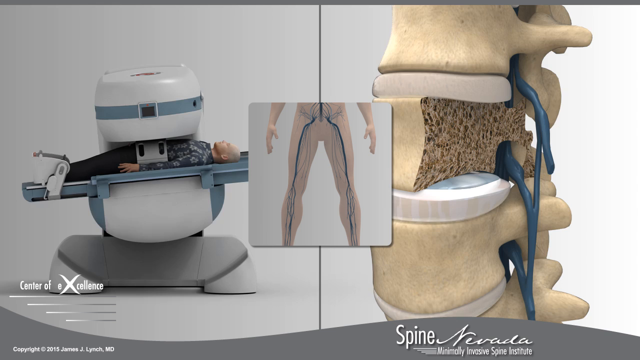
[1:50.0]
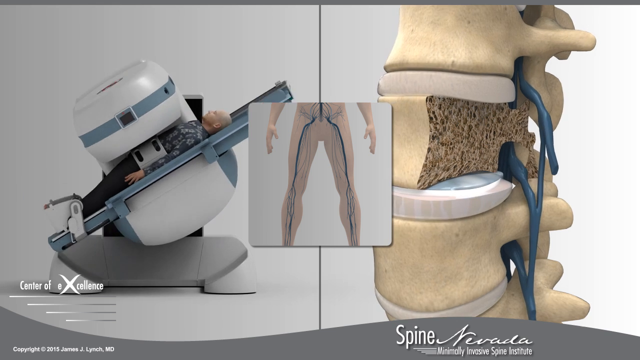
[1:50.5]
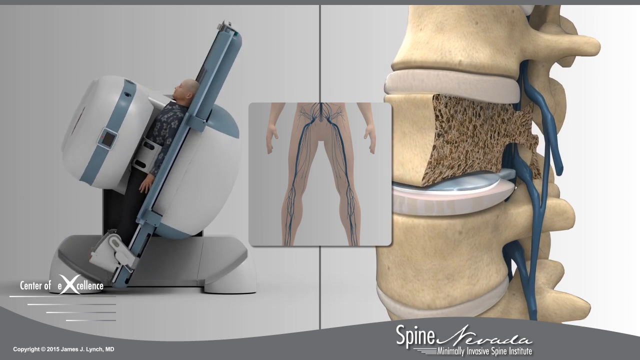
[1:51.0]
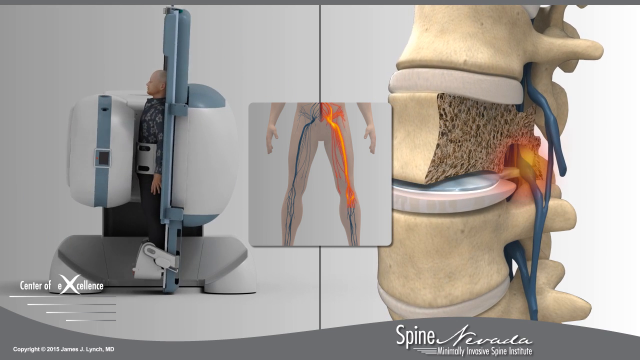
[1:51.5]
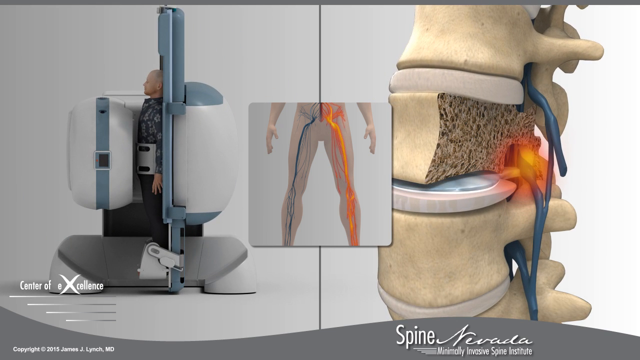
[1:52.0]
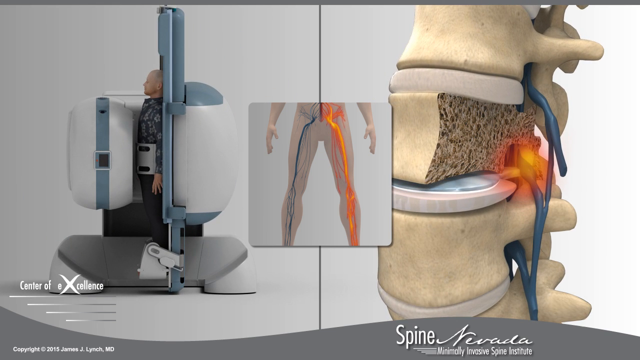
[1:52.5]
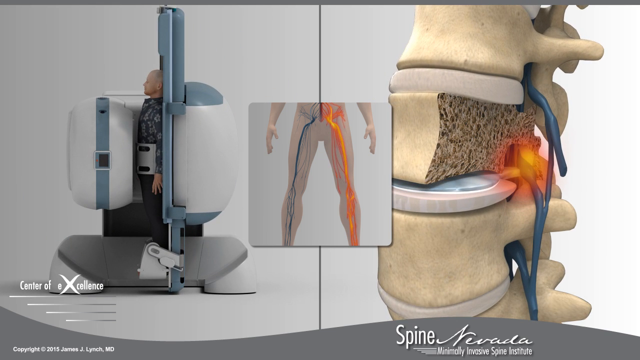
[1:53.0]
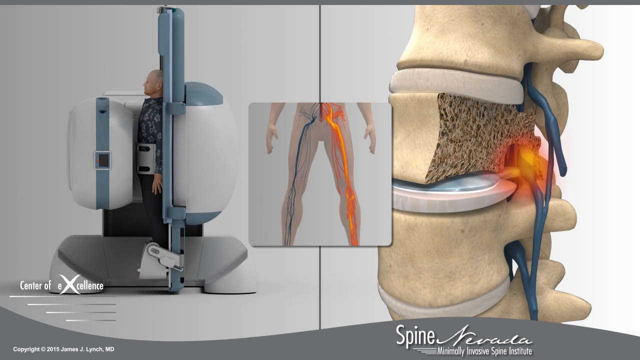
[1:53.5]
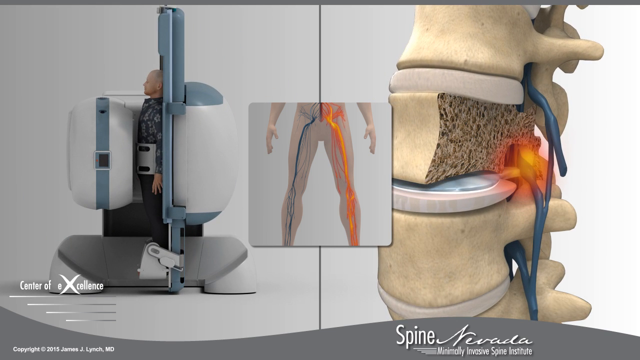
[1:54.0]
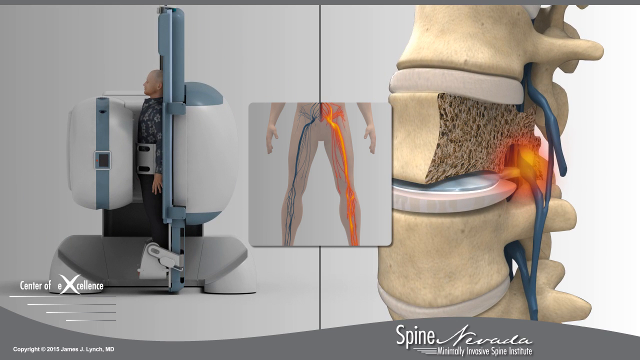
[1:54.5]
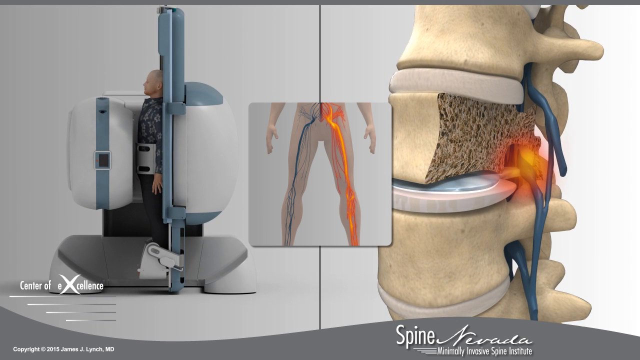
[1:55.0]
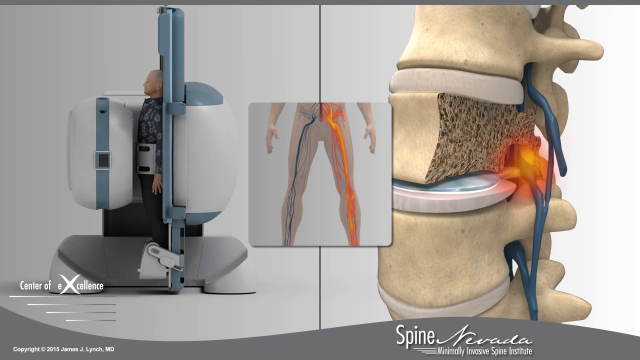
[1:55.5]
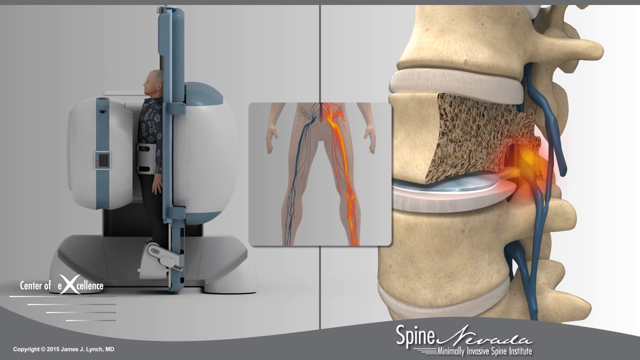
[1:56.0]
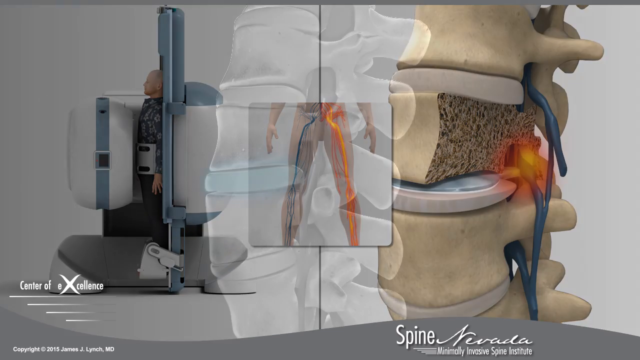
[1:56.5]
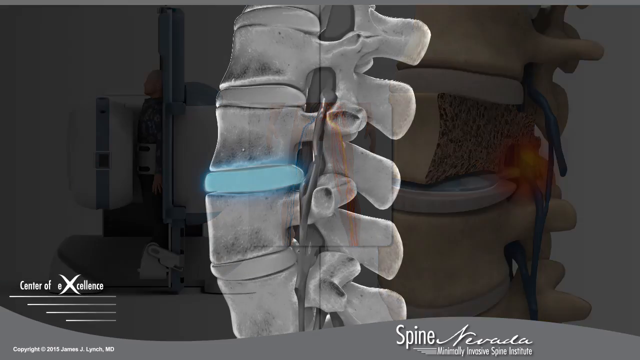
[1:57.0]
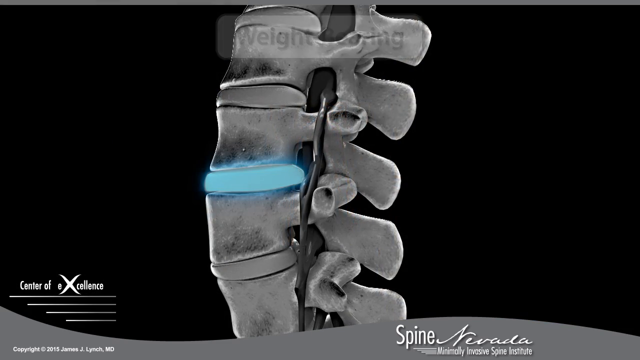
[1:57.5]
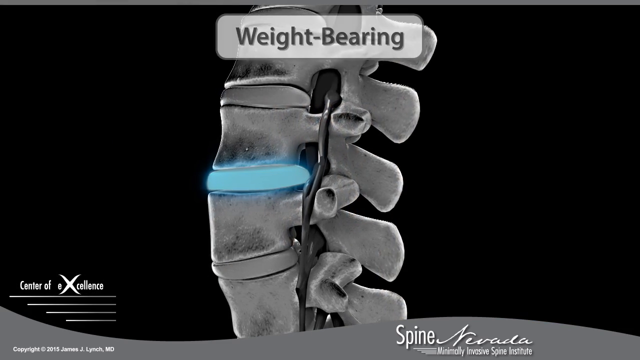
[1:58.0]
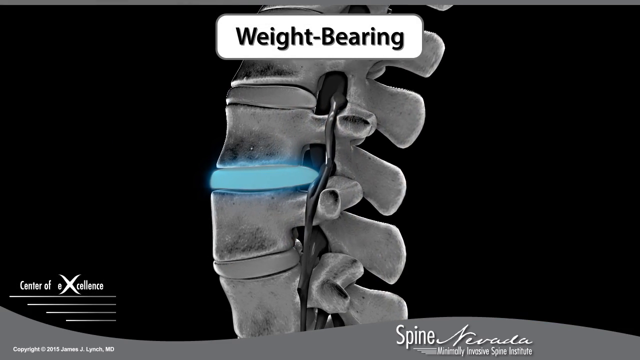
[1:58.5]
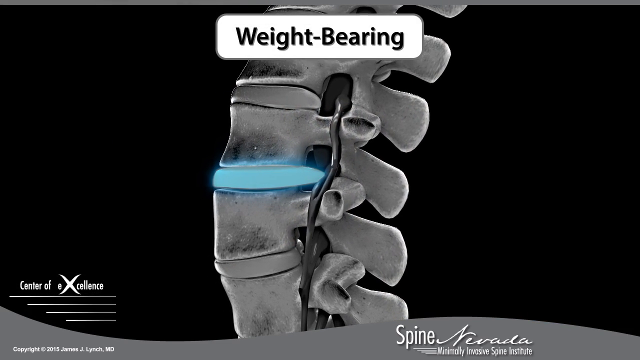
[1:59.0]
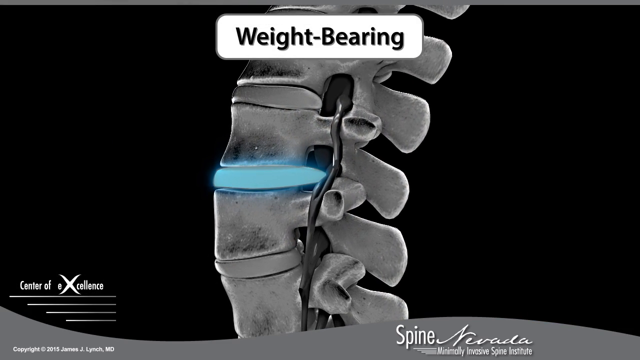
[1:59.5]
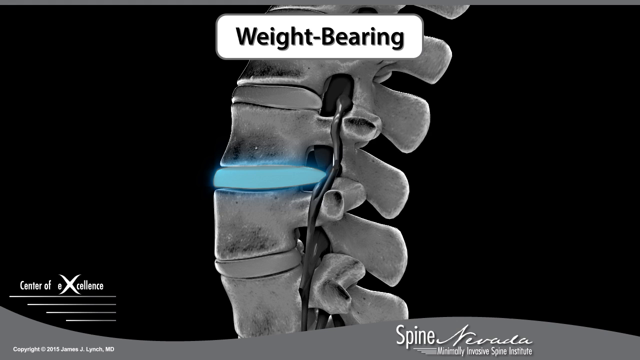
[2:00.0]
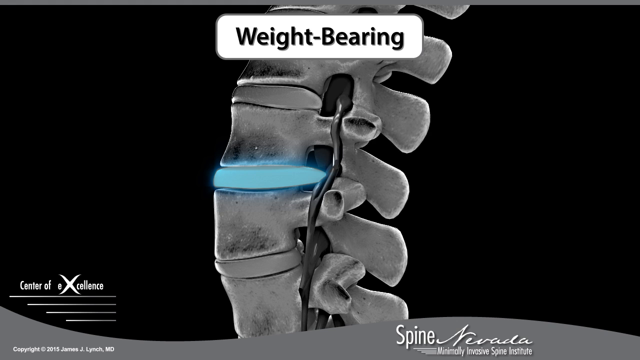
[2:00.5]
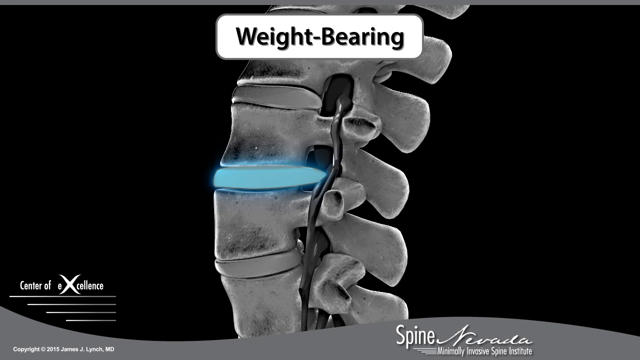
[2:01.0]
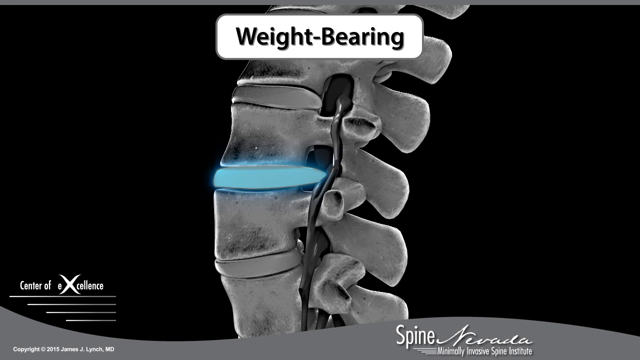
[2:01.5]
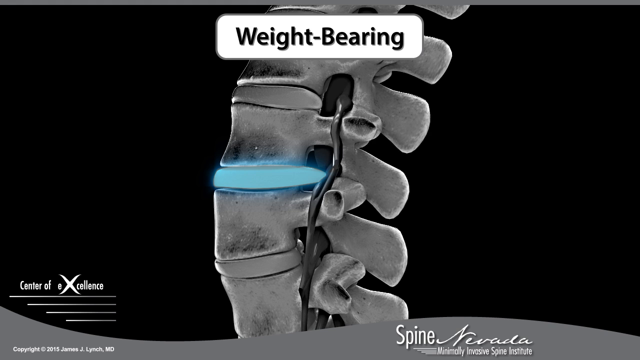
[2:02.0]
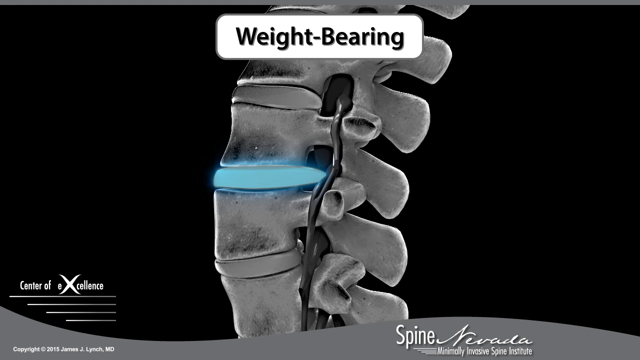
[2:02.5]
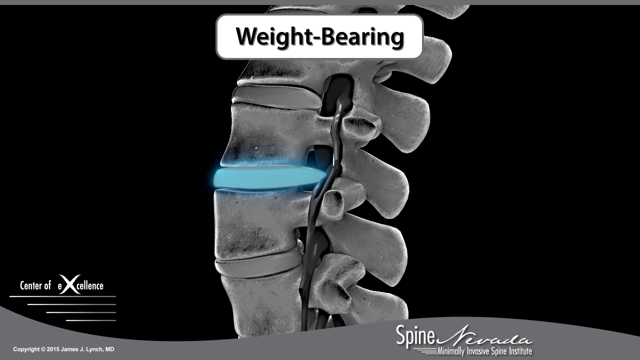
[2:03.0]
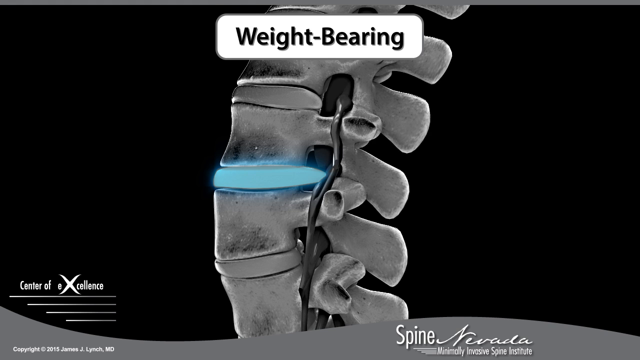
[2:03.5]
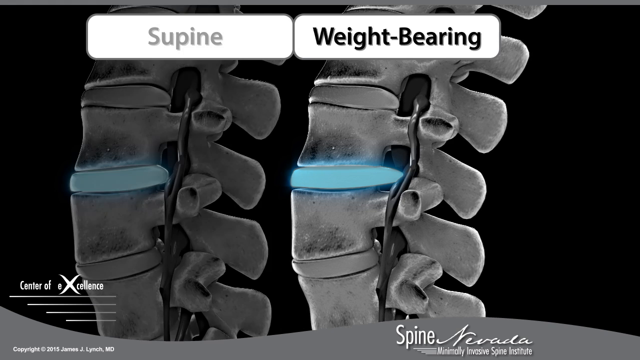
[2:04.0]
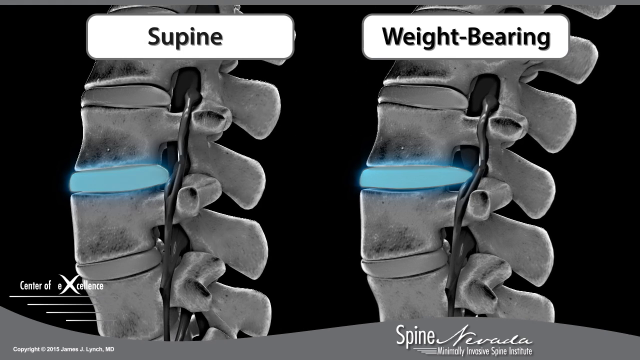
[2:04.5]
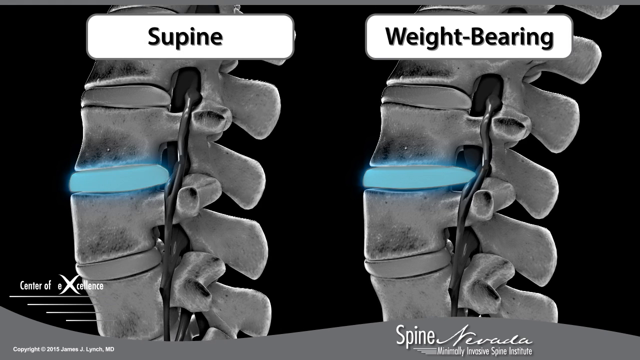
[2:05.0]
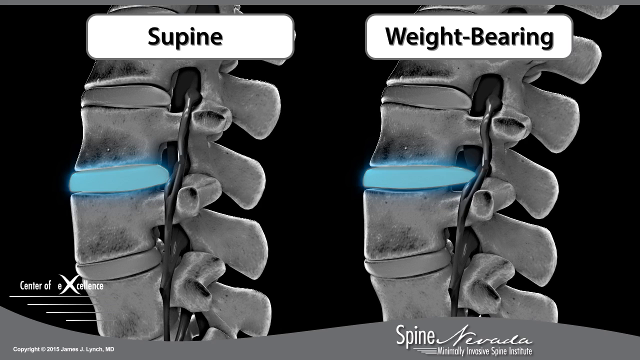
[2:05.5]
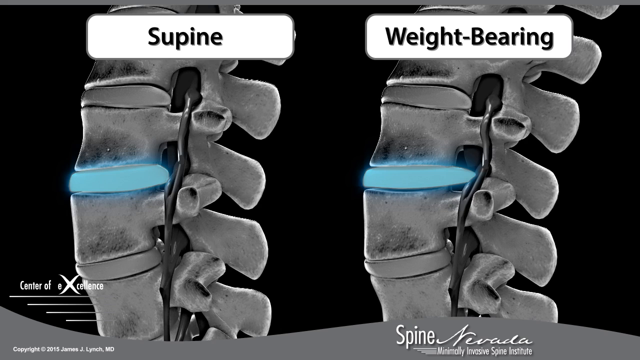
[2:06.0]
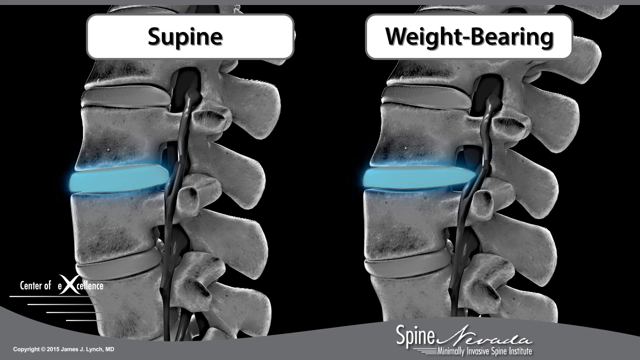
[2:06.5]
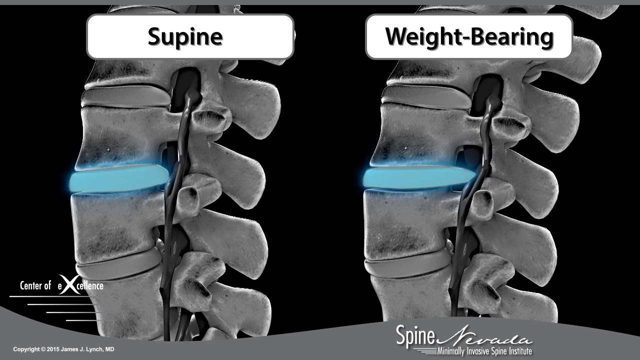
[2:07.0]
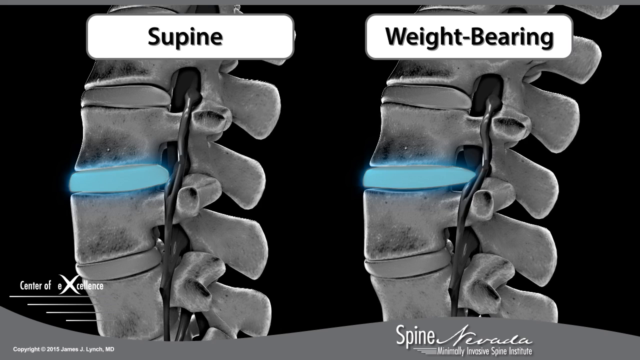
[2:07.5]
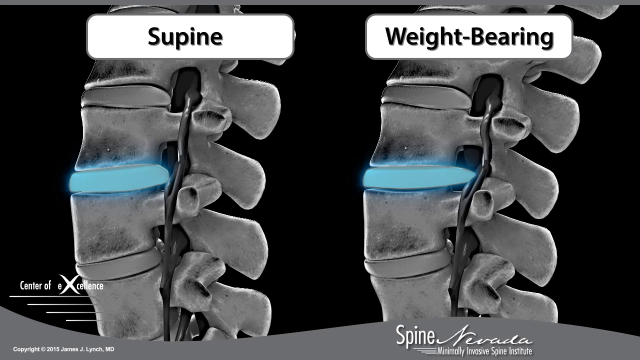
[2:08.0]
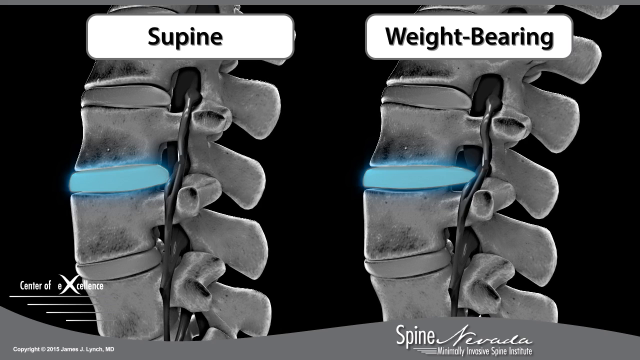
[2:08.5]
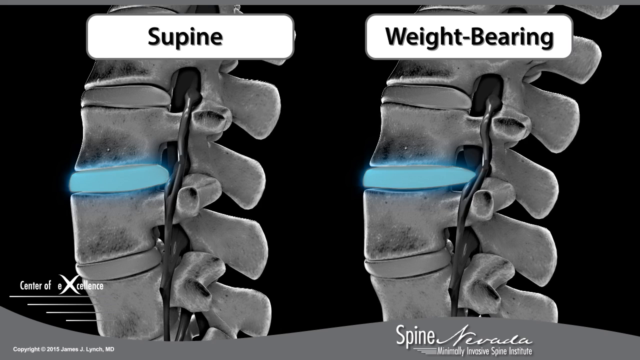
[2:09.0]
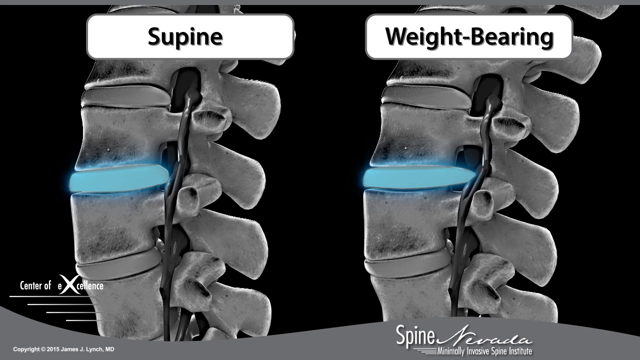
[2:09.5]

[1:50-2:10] The person in the machine on the left side quickly moves upright, and as that happens the spine on the right side moves forward and the nerve area becomes red, probably indicating impingement. In the frontal-view model in the middle of the screen, the nerve in the person's left leg becomes red. That model fades away and another appears, back to an x-ray-like side view of the person's vertebrae, with "weight bearing" on top and a disc in blue. The vertebra slowly moves to the right, the whole model then moves to the right, and another x-ray model of the vertebrae appears on the left, labeled "supine" and also showing the blue highlighted vertebra.